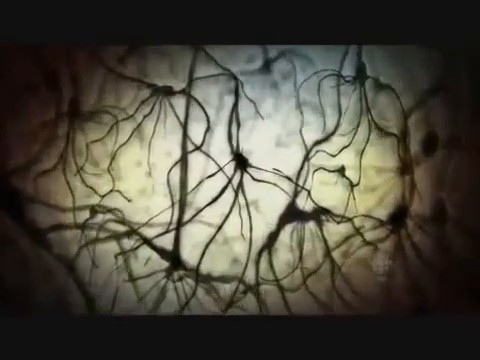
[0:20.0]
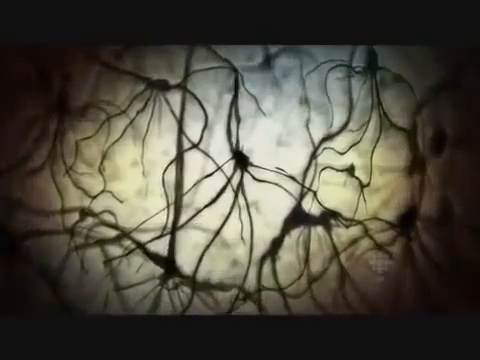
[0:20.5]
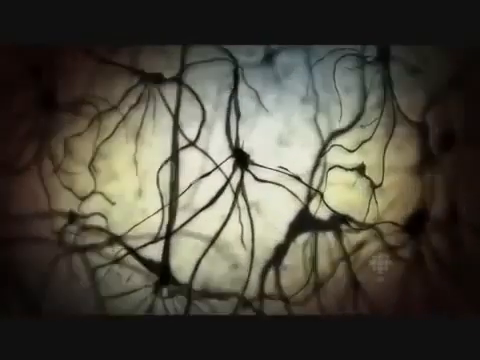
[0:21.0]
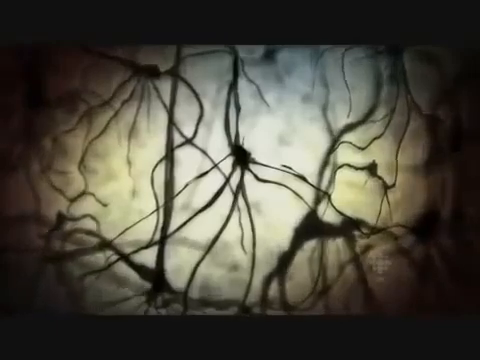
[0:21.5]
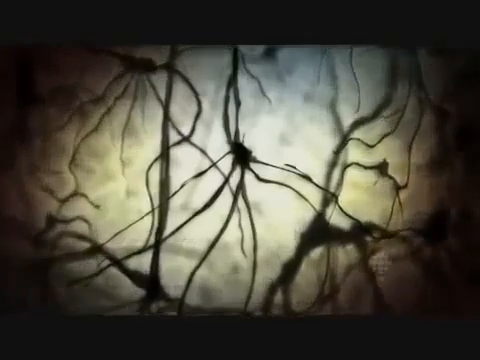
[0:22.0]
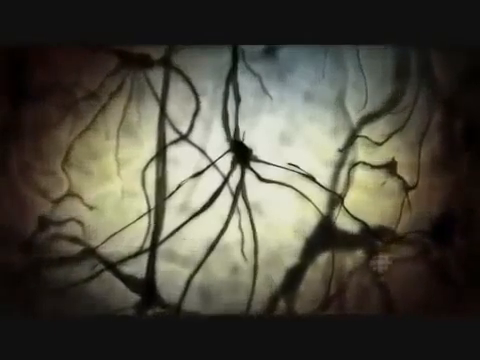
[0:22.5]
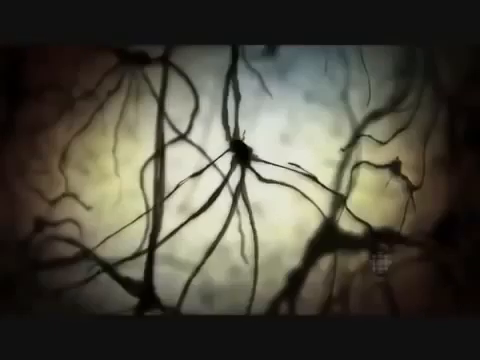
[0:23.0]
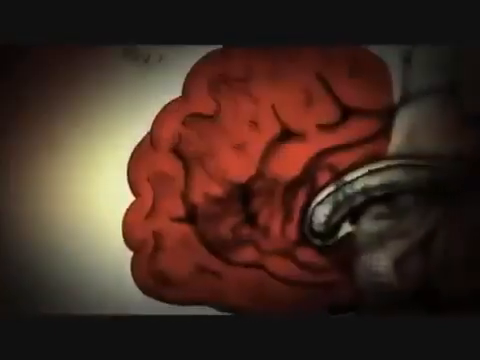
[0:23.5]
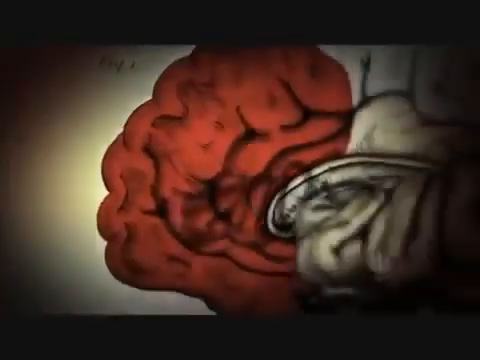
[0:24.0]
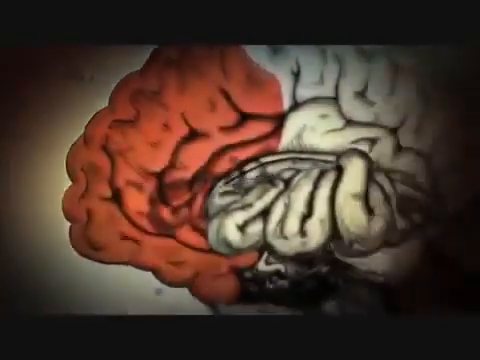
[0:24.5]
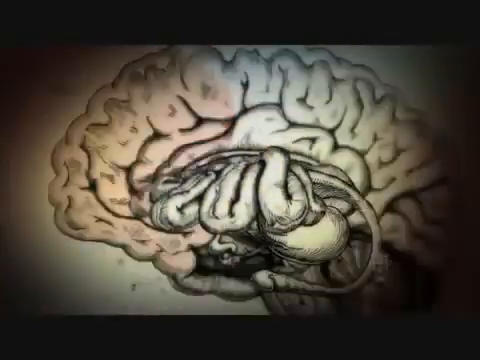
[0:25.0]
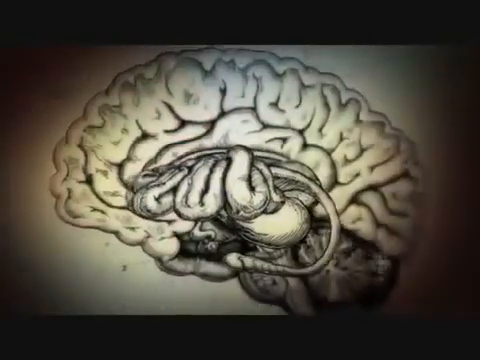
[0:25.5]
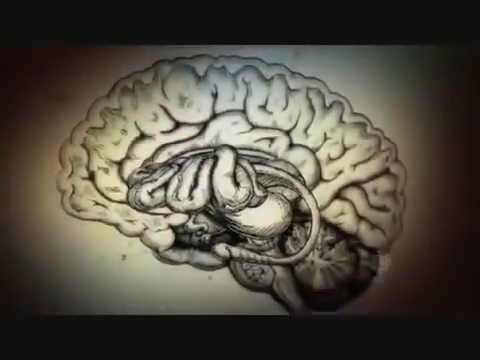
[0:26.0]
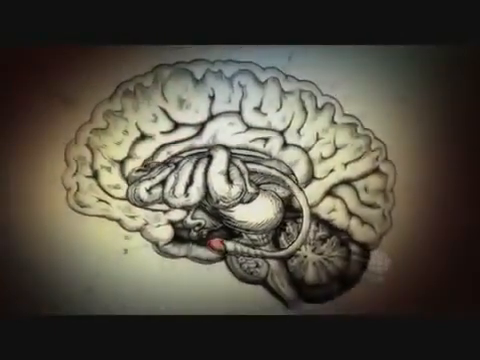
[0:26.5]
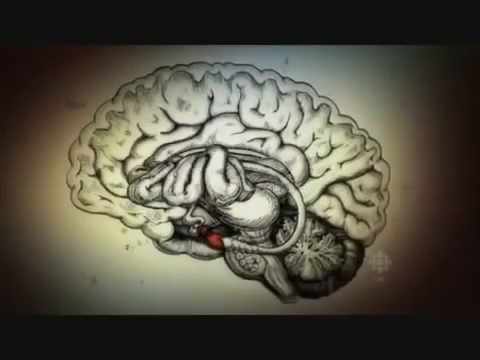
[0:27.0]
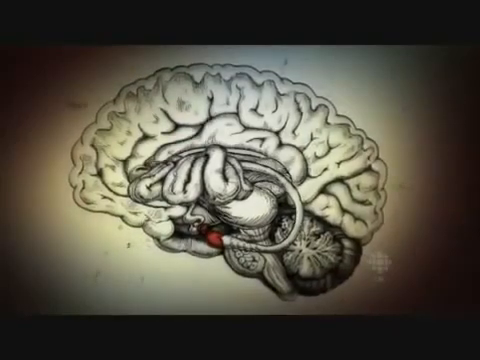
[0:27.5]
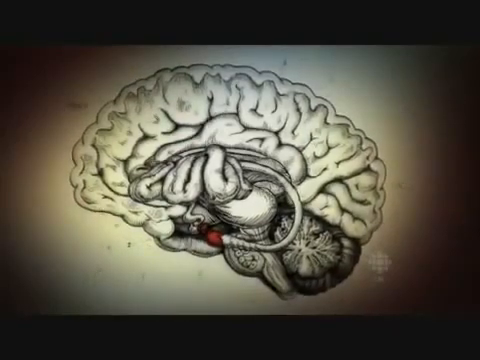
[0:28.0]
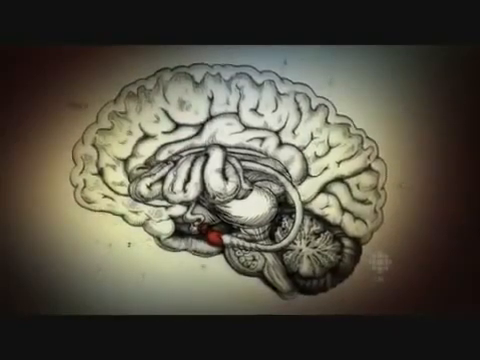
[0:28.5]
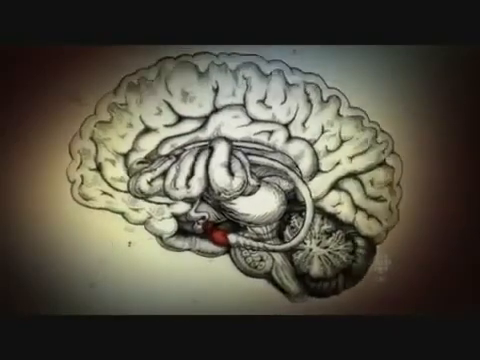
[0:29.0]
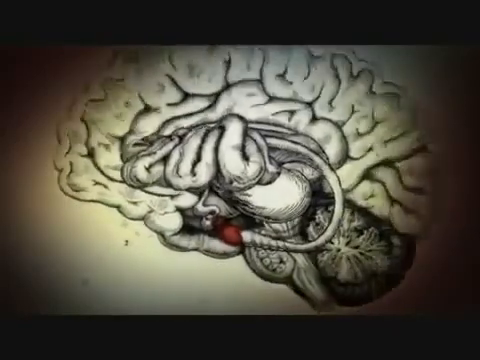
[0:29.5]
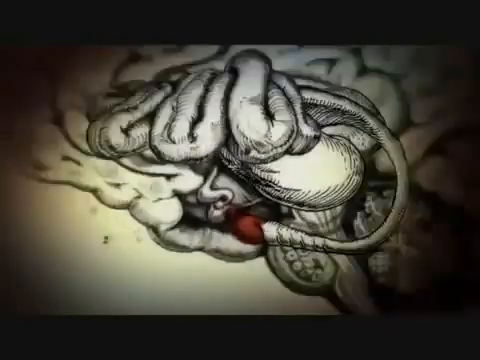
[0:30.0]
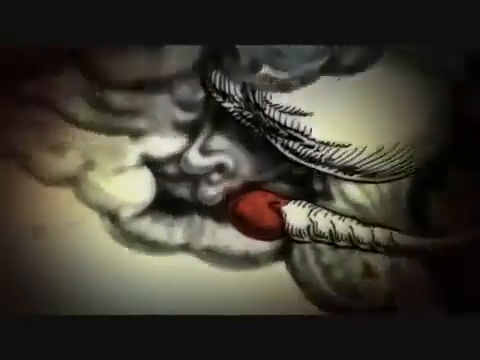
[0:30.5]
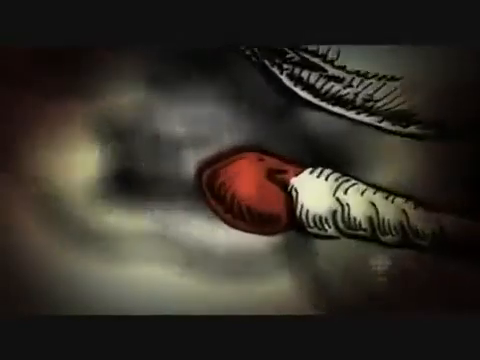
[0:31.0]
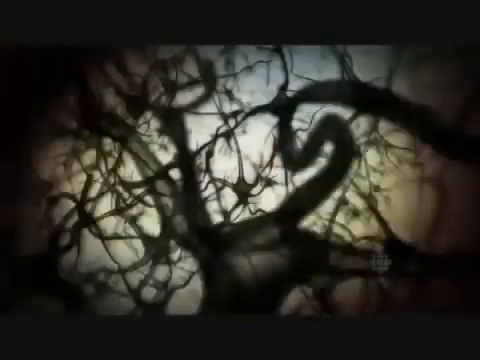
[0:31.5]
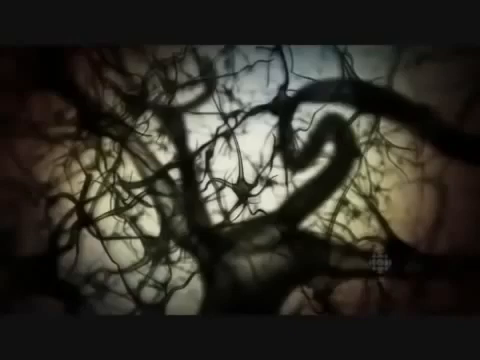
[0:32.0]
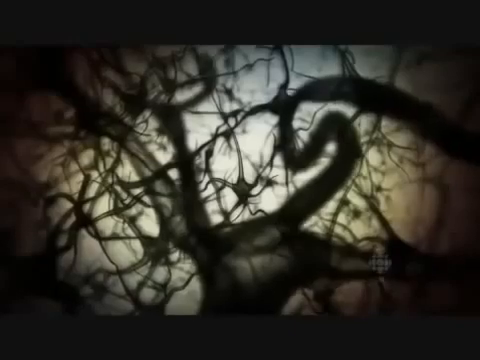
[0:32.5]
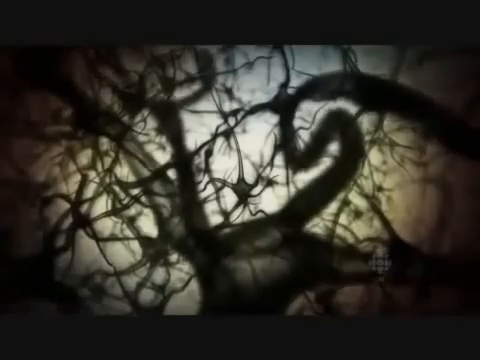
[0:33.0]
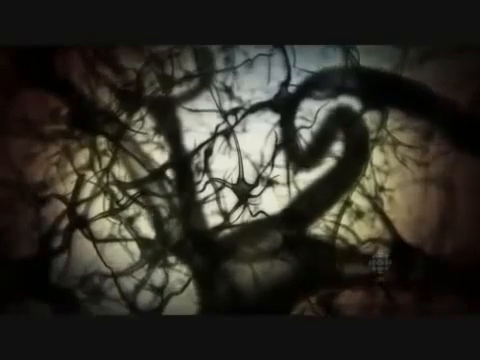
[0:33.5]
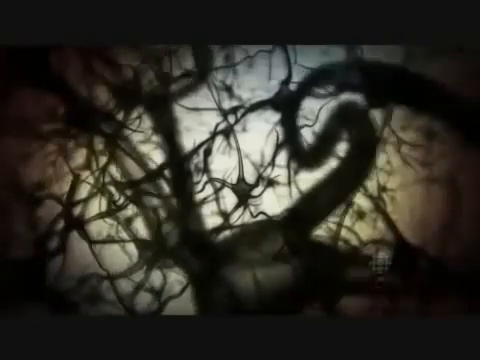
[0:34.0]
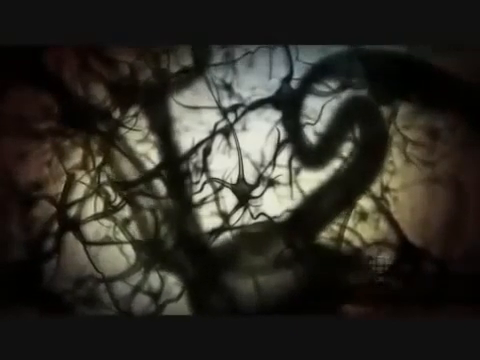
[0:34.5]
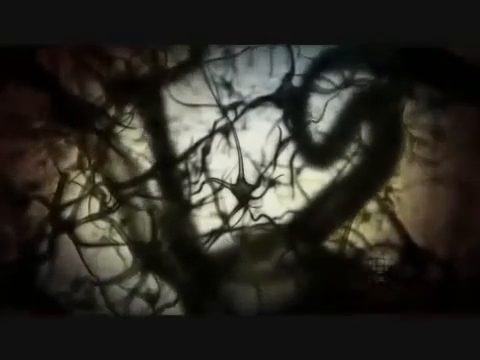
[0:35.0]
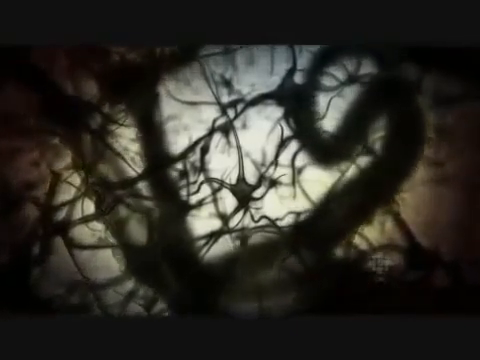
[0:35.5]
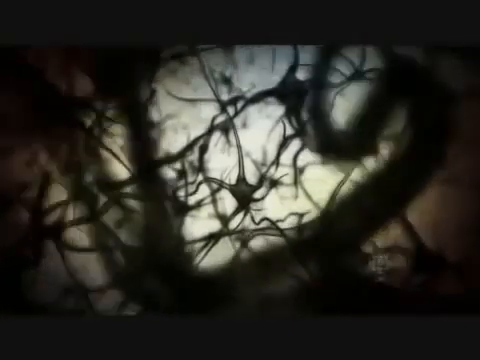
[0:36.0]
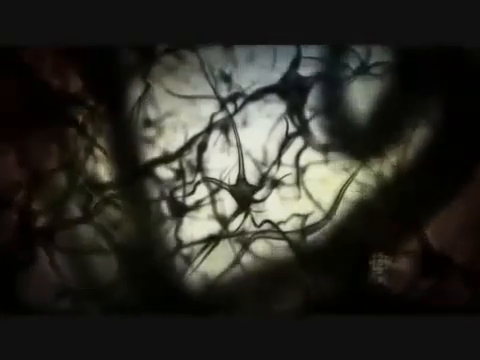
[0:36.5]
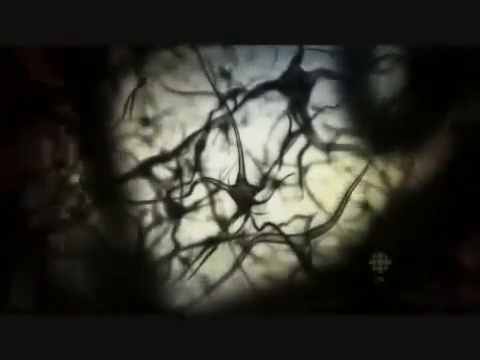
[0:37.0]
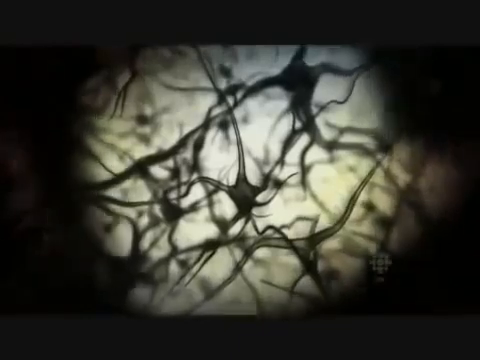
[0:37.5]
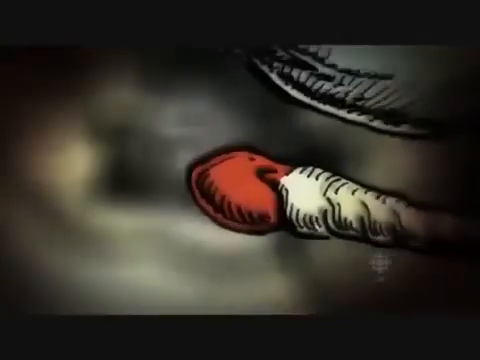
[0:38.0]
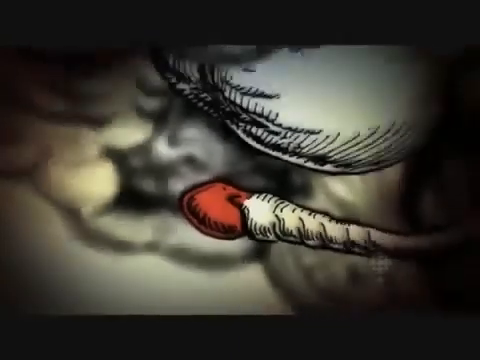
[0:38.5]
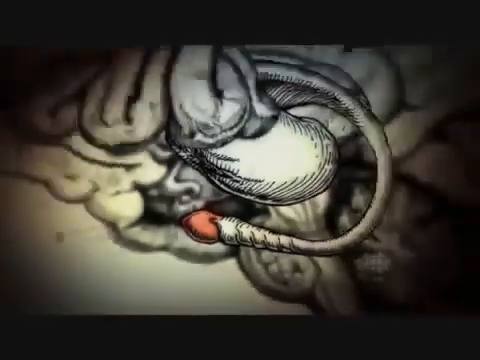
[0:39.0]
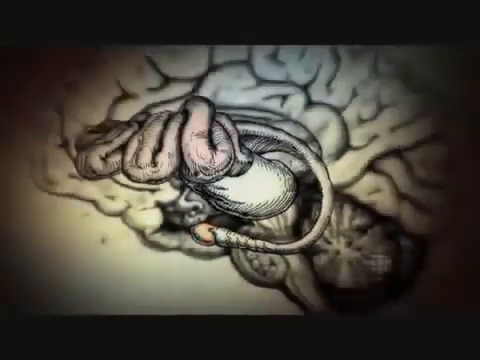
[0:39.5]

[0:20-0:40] The view of many brain neurons slowly zooms in. The scene changes and a brain comes in from the right side, seen from the side, showing the middle area of the brain. The view zooms in and focuses on one red area on the brain. Next comes a scene of a bunch of black neurons on a white background. Then the red object connected to the brain appears, and the view zooms out, backing away from the brain. A highlighted red area sits in the center, to the left, of the brain in this side view. The brain is all black and white, with no color except this red area in the center.